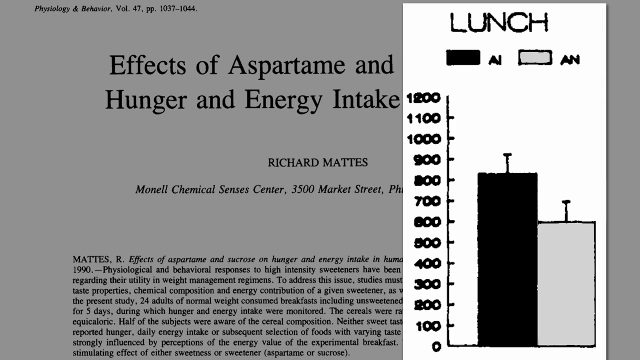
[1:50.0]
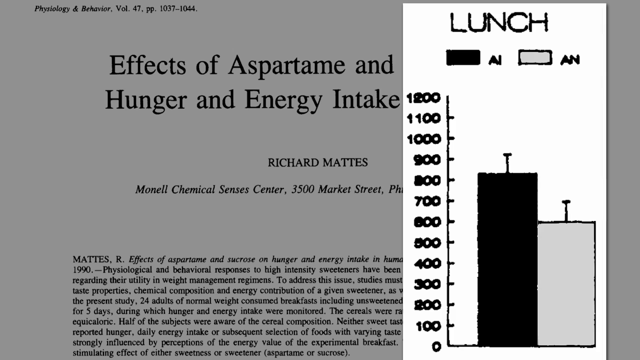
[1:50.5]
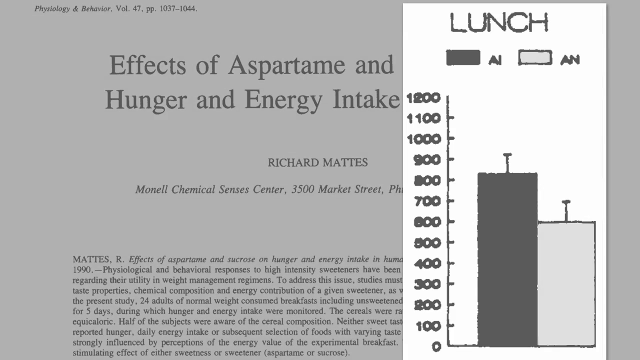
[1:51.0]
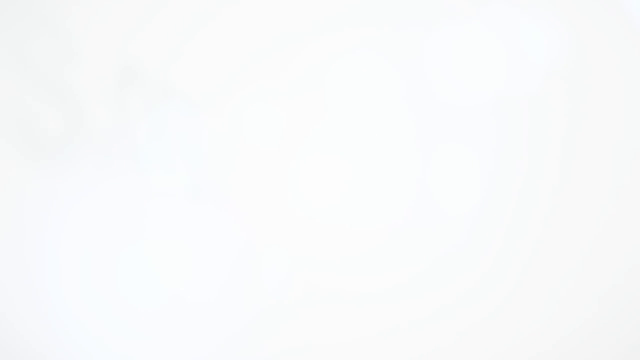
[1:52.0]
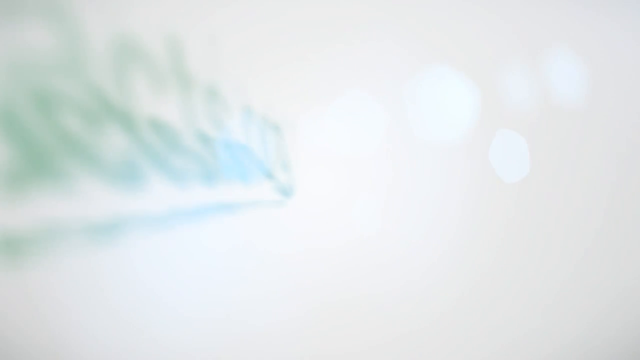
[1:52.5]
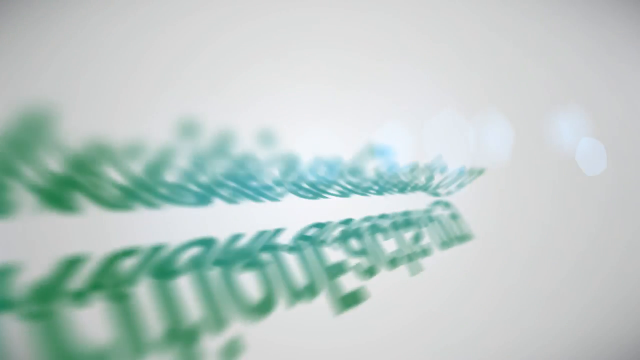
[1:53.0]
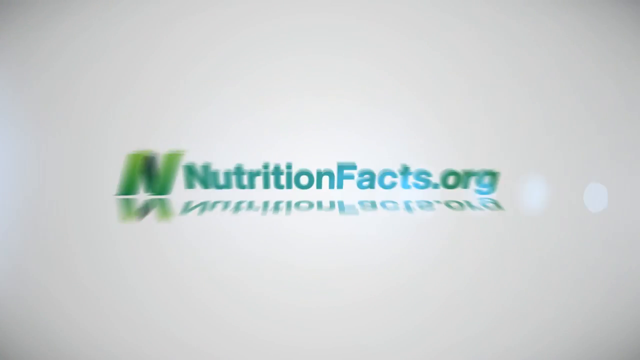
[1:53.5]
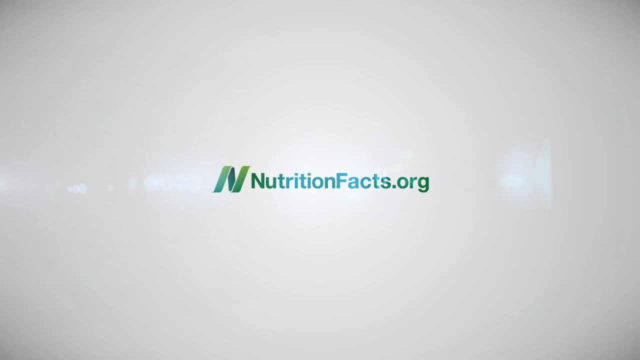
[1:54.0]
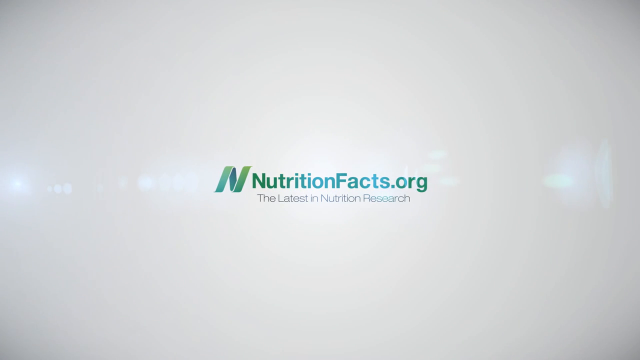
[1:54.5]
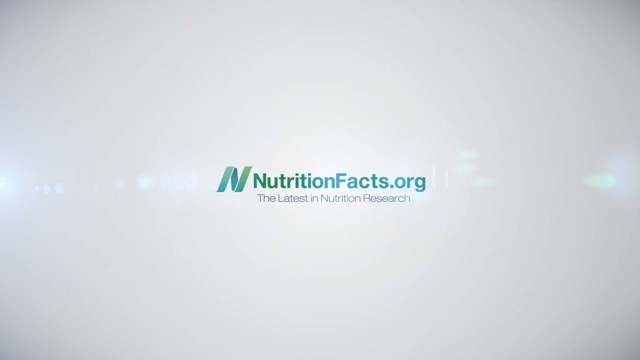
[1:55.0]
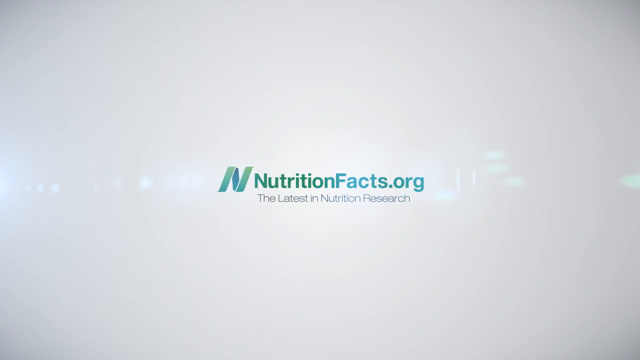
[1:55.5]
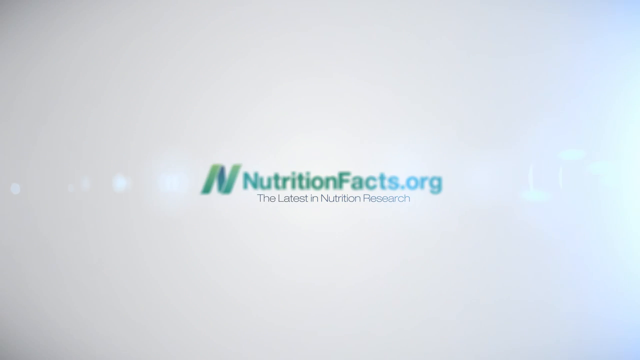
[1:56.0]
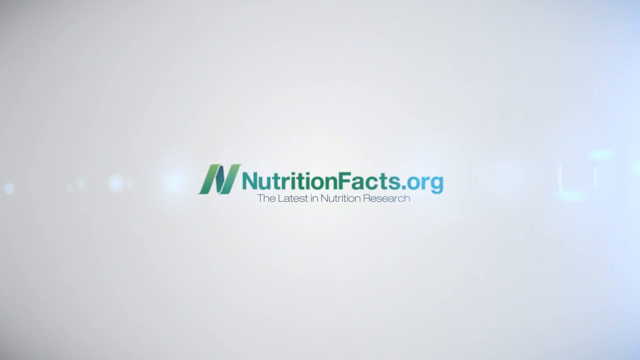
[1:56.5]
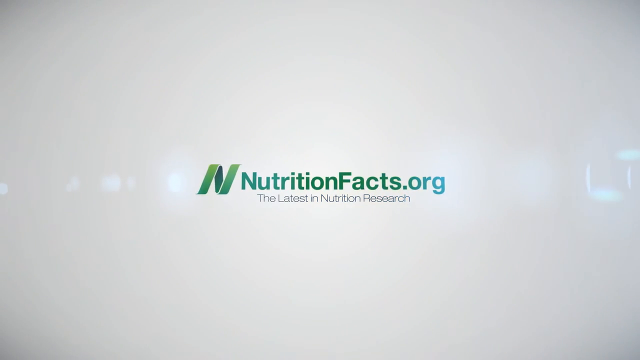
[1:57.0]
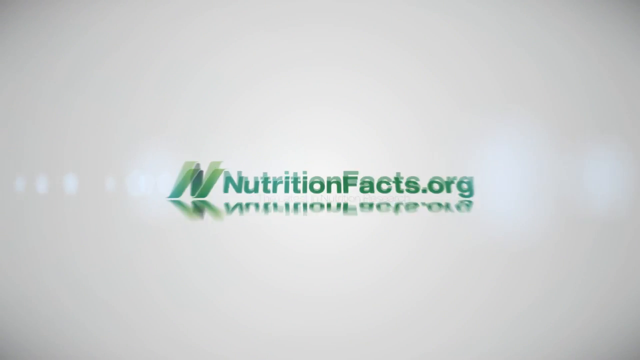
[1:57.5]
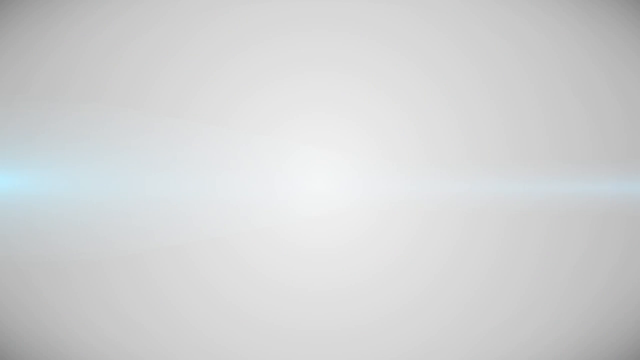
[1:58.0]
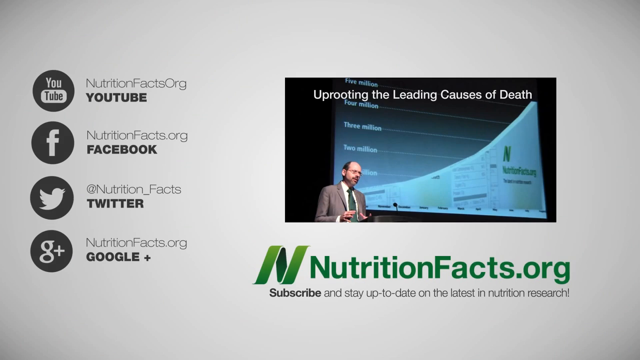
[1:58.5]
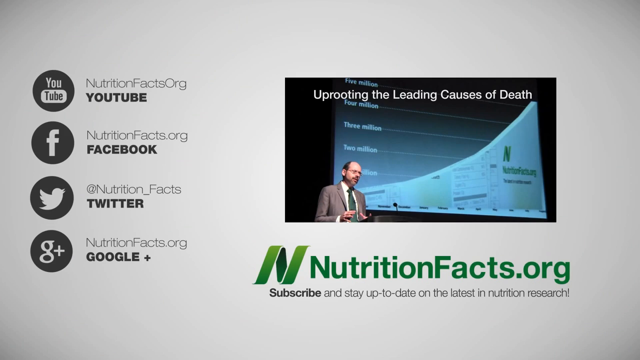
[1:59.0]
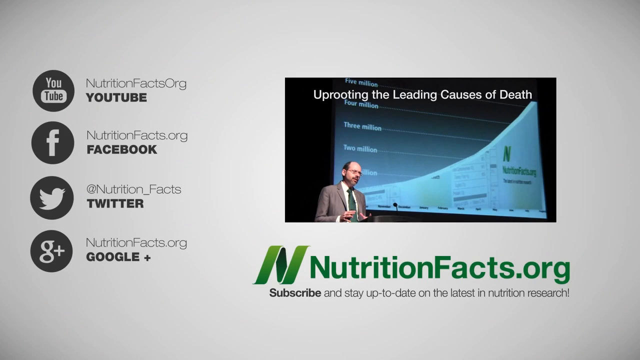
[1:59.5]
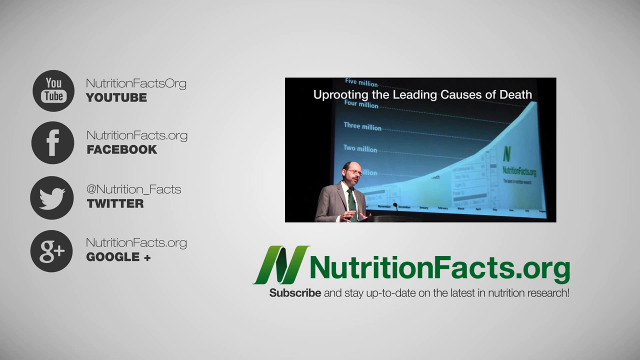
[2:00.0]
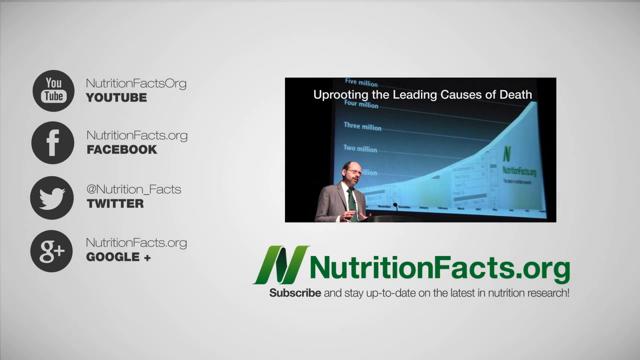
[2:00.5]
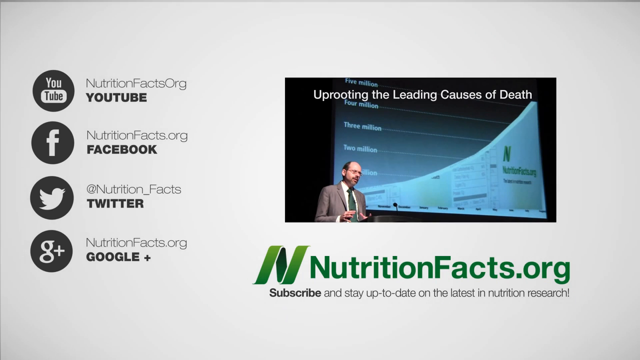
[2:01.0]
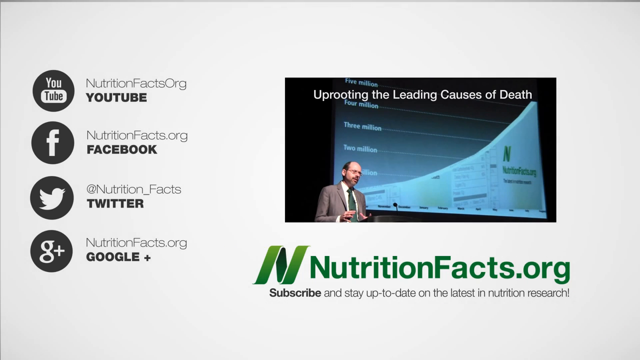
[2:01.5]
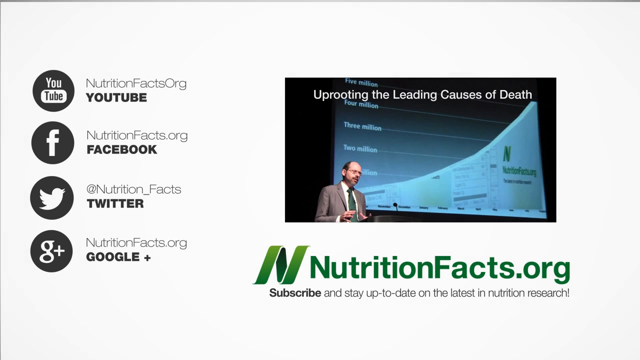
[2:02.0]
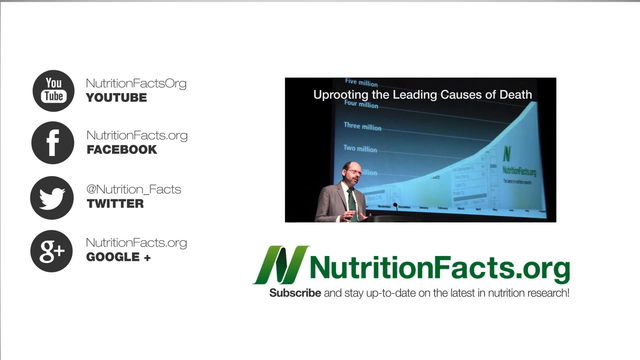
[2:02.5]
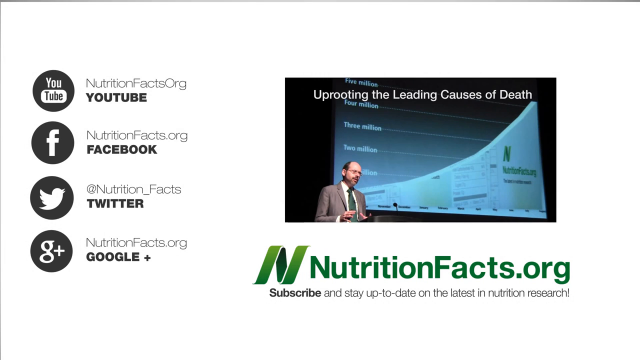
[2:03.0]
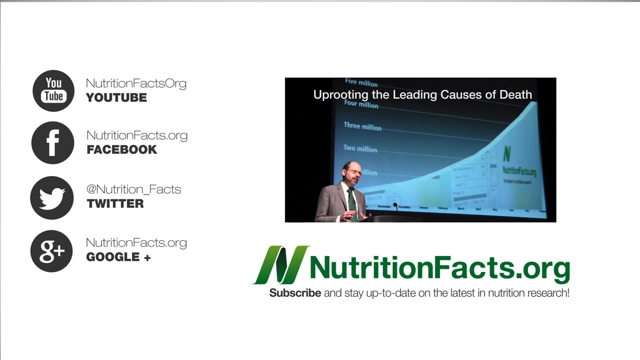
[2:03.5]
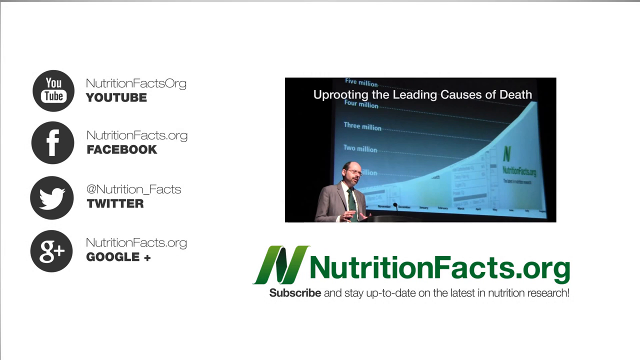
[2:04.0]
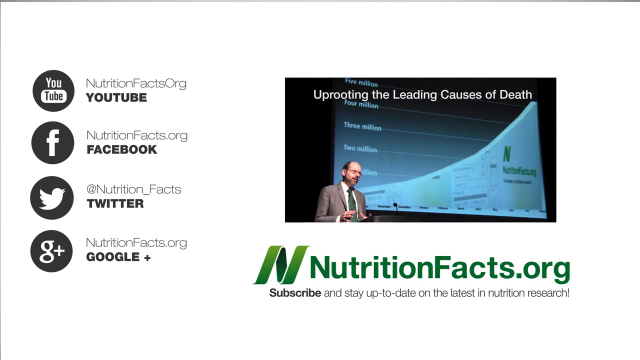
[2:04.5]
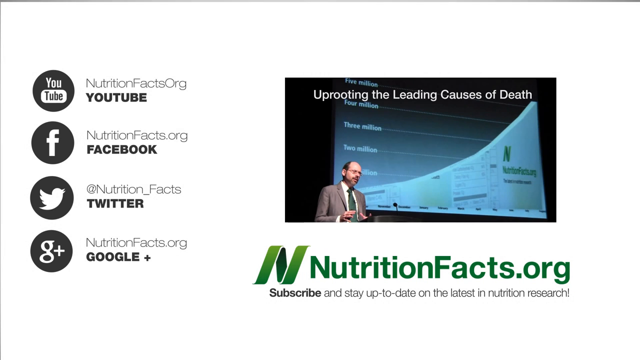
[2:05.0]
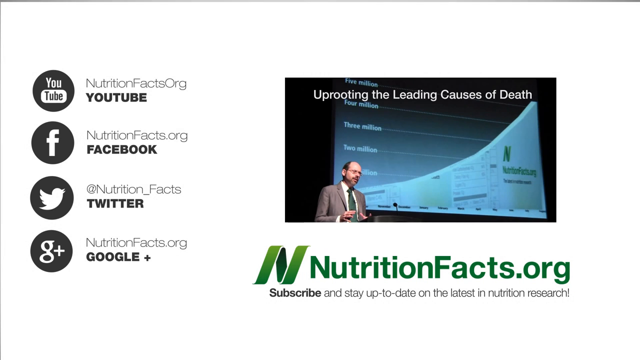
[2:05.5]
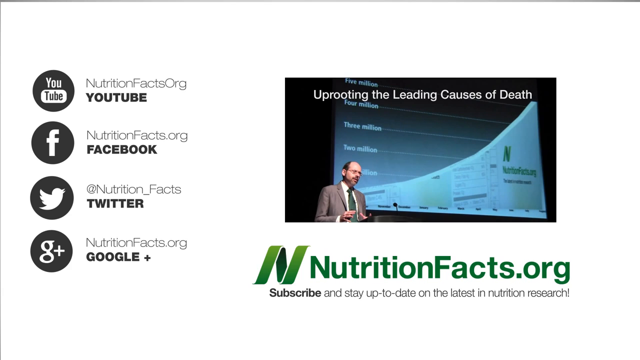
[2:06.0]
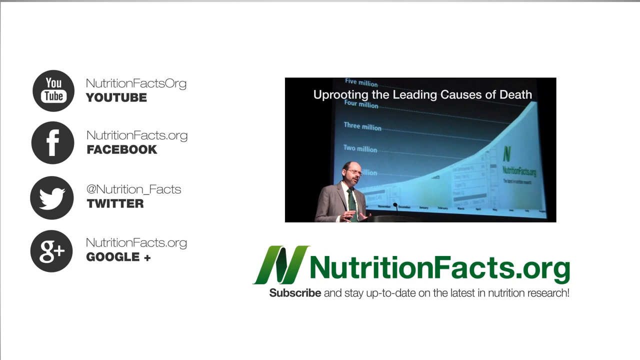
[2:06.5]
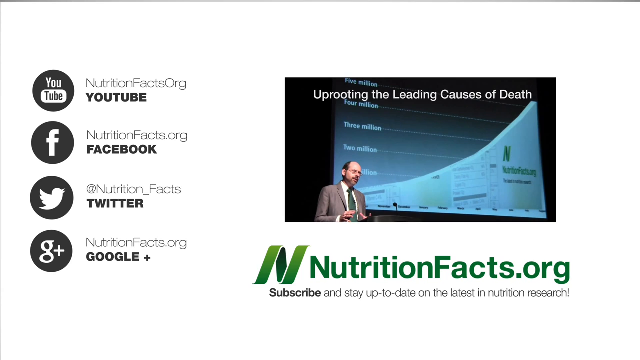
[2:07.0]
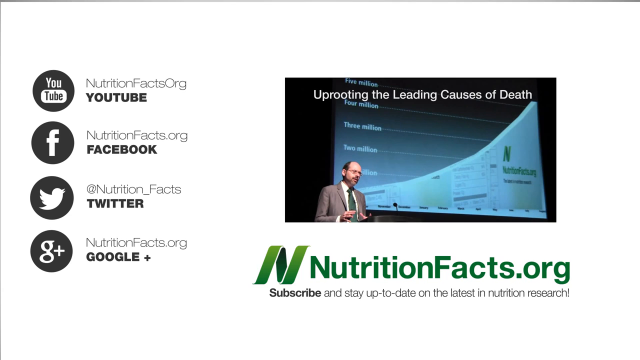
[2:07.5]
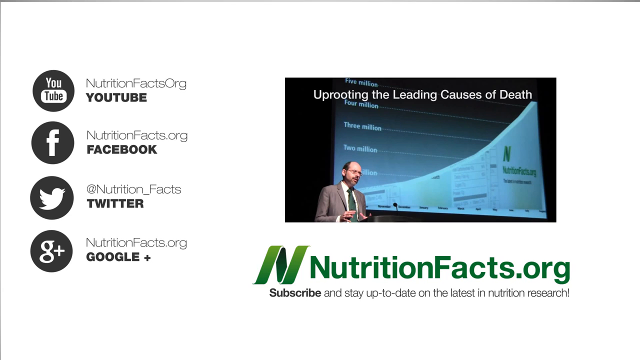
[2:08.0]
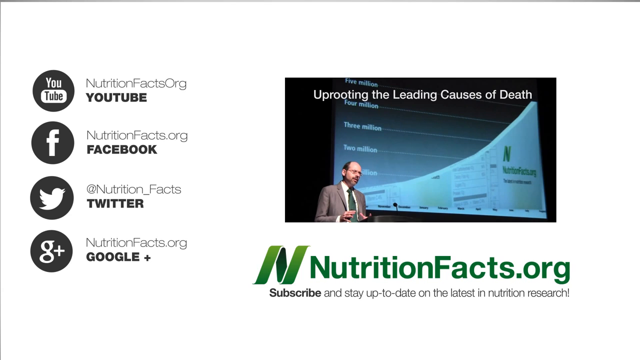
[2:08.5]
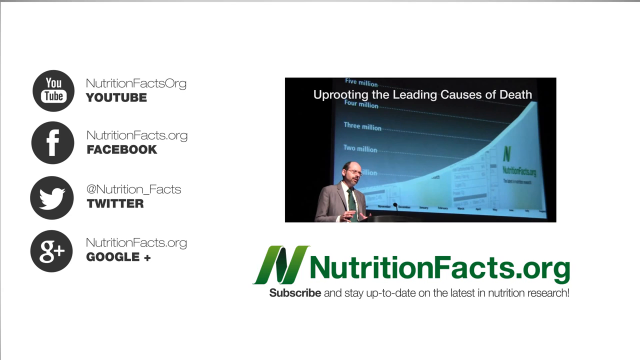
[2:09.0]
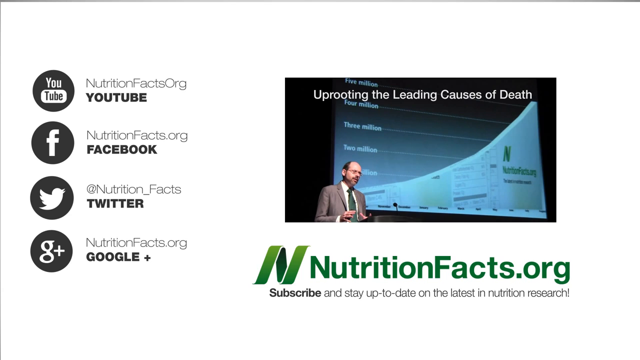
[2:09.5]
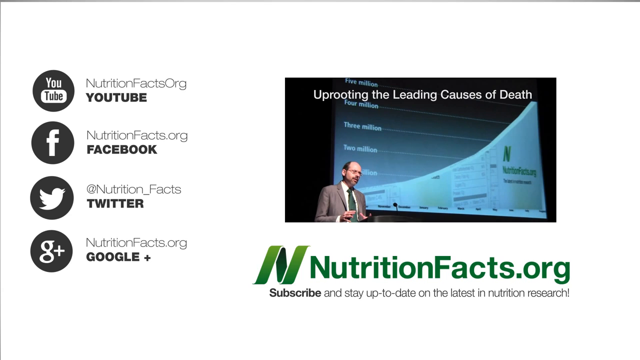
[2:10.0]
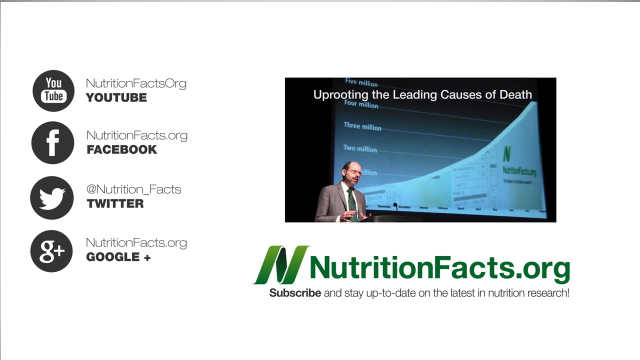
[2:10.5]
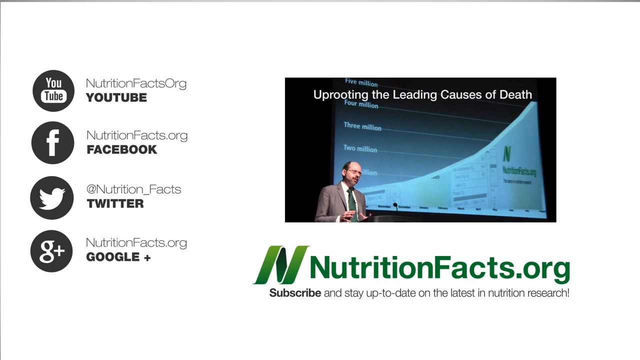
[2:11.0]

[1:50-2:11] The bar chart is on screen at first. The screen then changes to the nutritionfacts.org logo in dark and light green text, in the center of the screen against a white to off-white background. The line "the latest in nutrition research" appears, and ovals animate horizontally from left to right across the center of the screen. Next comes a thumbnail of a man with a short beard and glasses presenting in front of a screen that reads "Uprooting the Leading Causes of Death." Contact information for nutritionfacts.org then appears in a column on the left, listing YouTube, Facebook, Twitter, and Google+, along with an invitation to subscribe and stay up to date on the latest in nutrition research. This end screen stays up for about 15 seconds until the video ends.